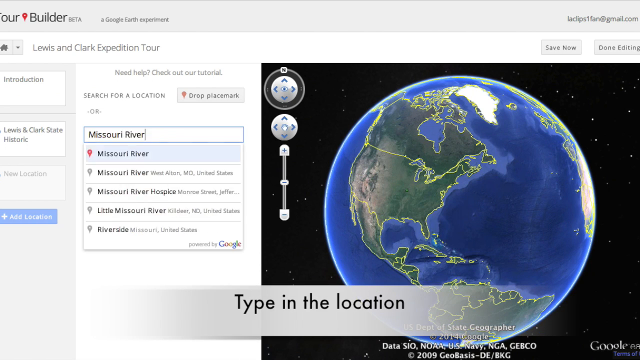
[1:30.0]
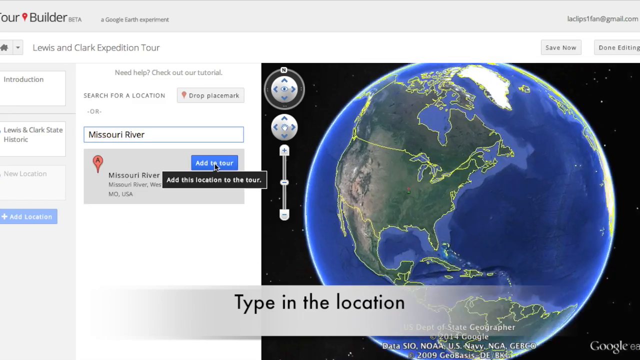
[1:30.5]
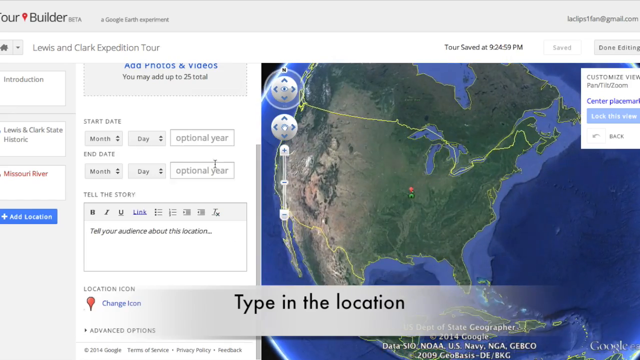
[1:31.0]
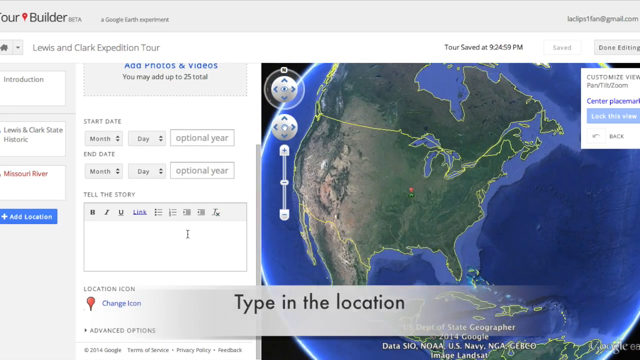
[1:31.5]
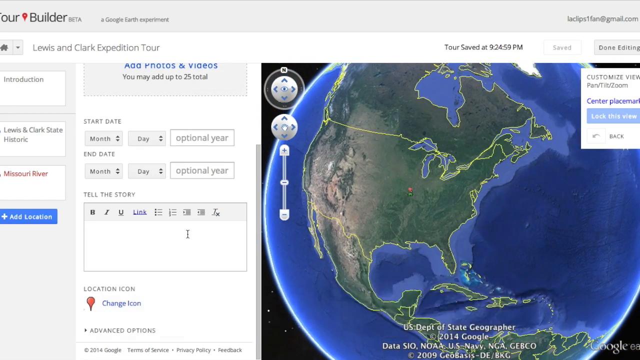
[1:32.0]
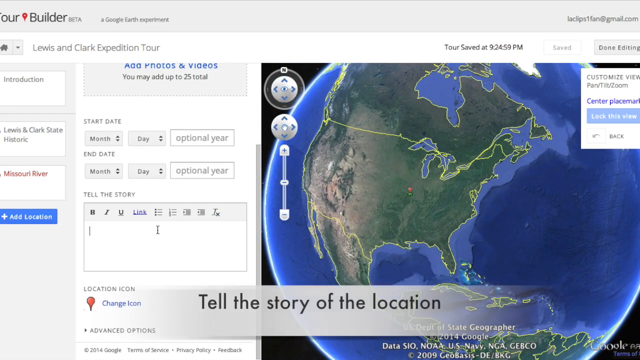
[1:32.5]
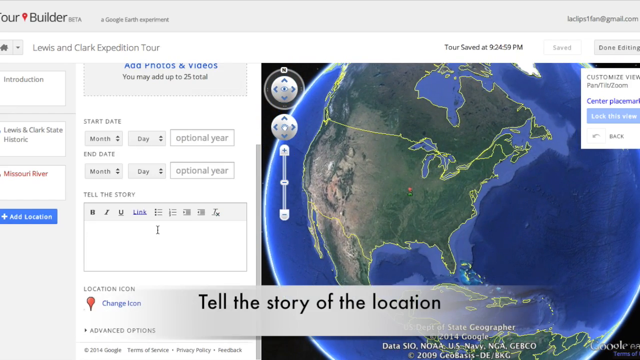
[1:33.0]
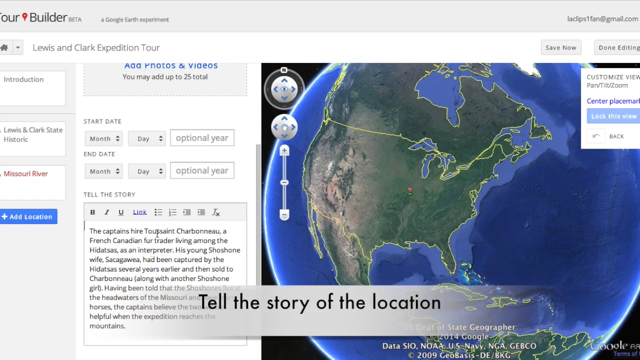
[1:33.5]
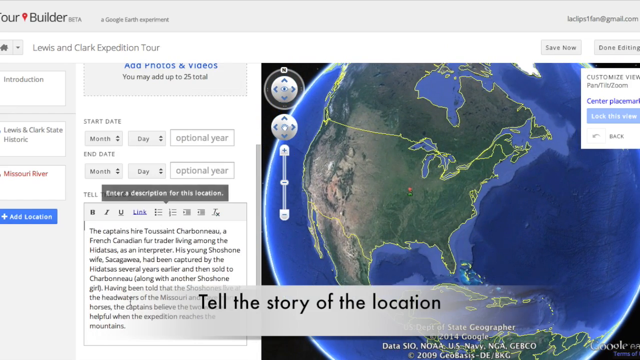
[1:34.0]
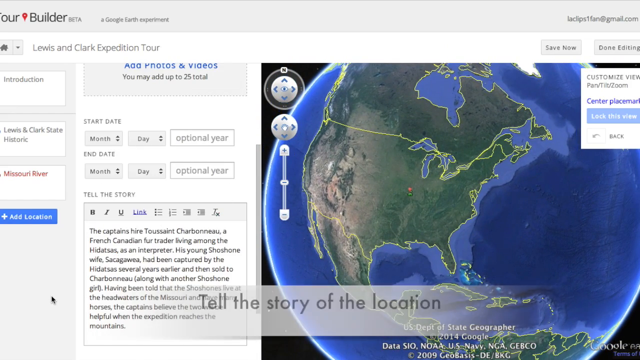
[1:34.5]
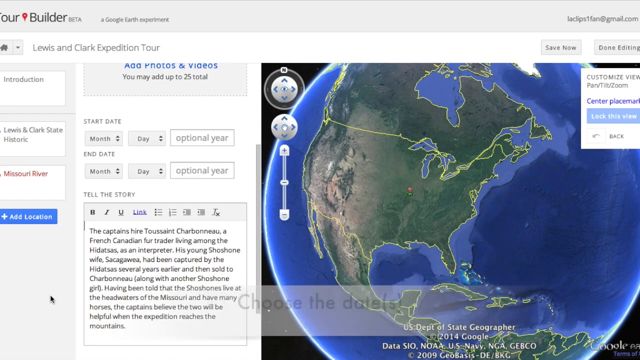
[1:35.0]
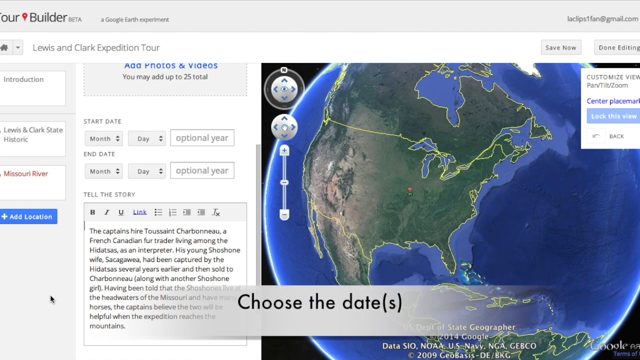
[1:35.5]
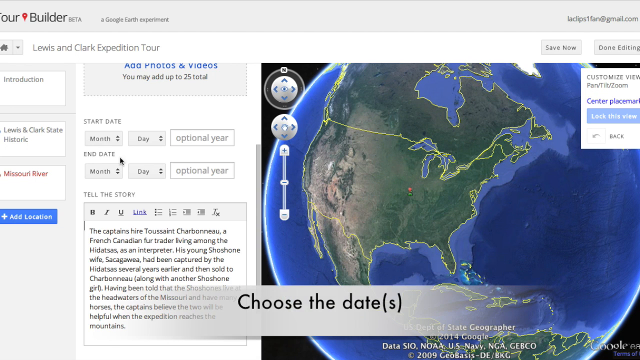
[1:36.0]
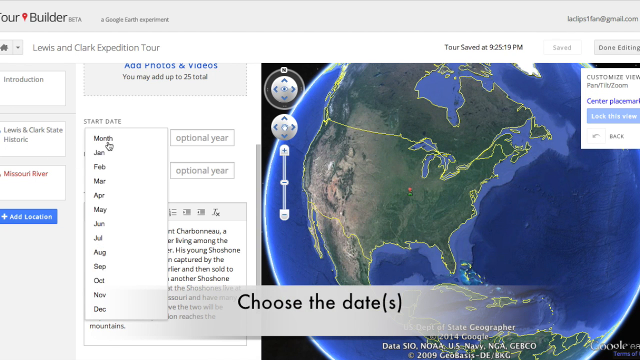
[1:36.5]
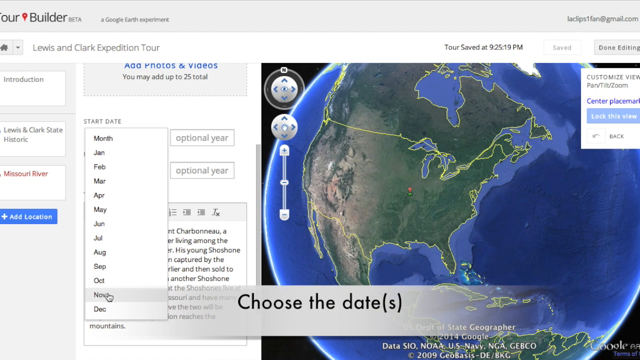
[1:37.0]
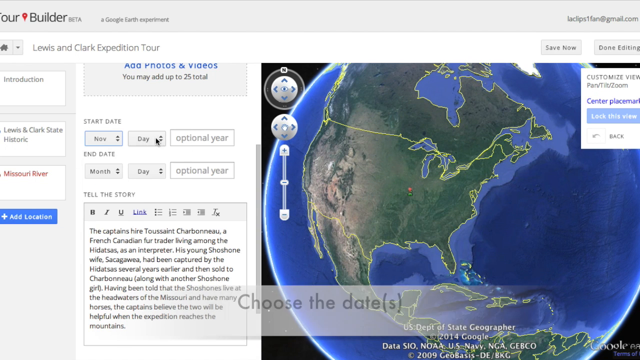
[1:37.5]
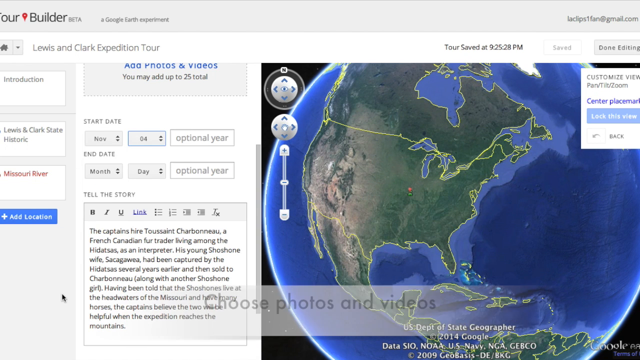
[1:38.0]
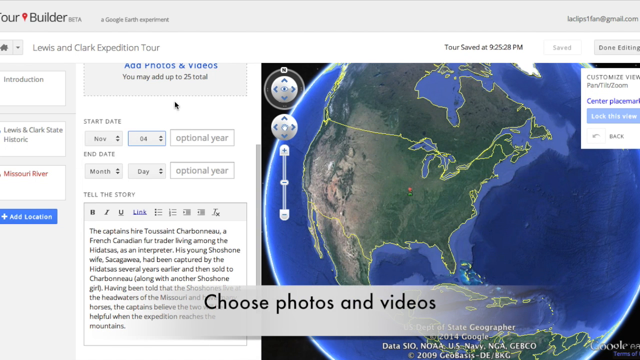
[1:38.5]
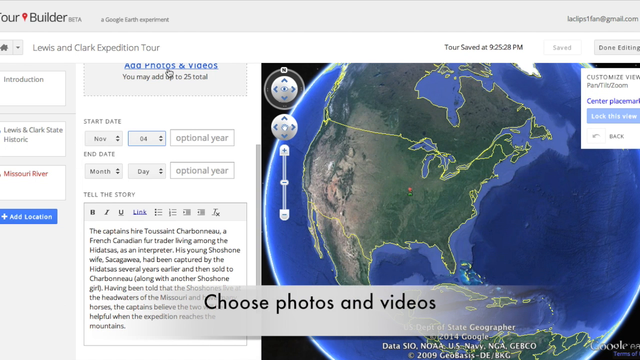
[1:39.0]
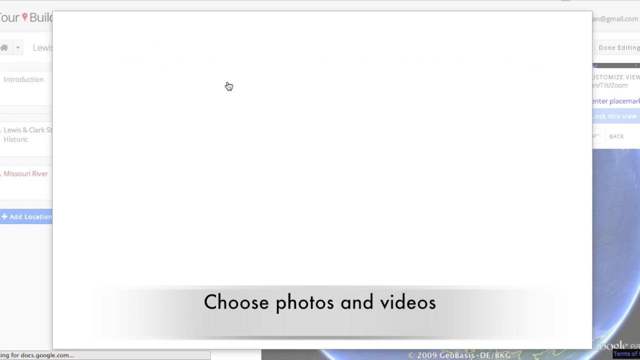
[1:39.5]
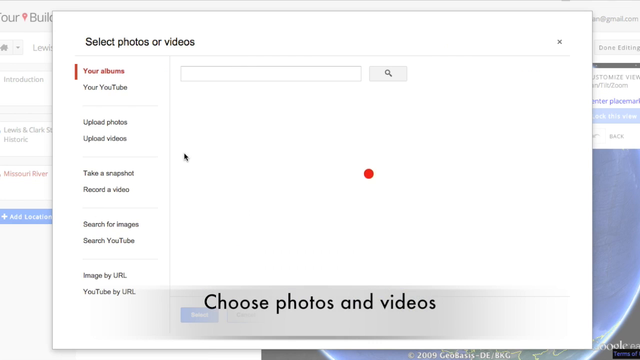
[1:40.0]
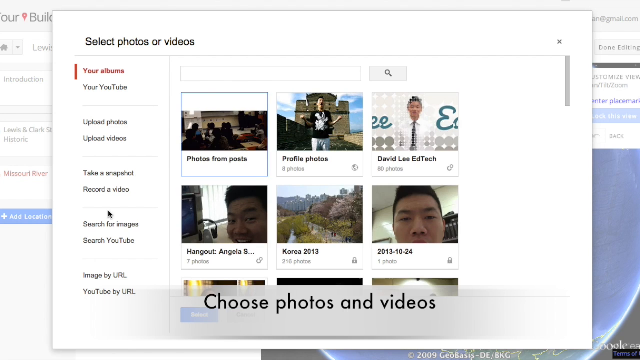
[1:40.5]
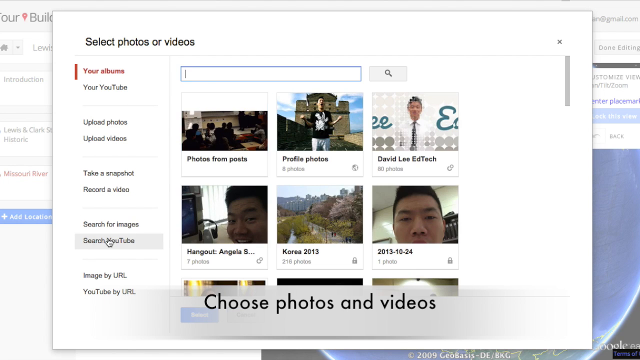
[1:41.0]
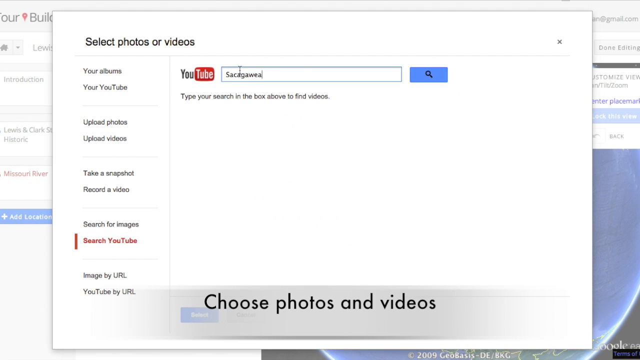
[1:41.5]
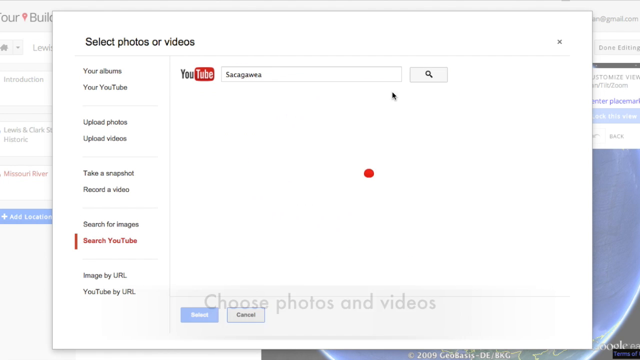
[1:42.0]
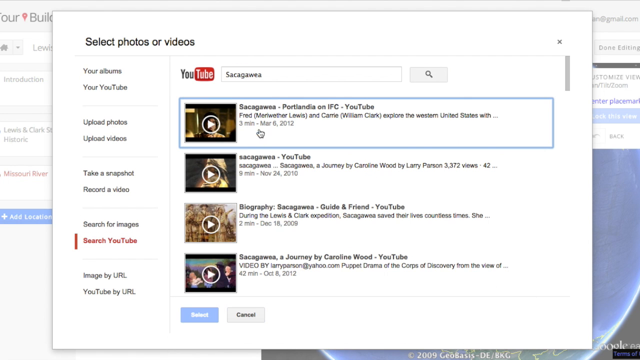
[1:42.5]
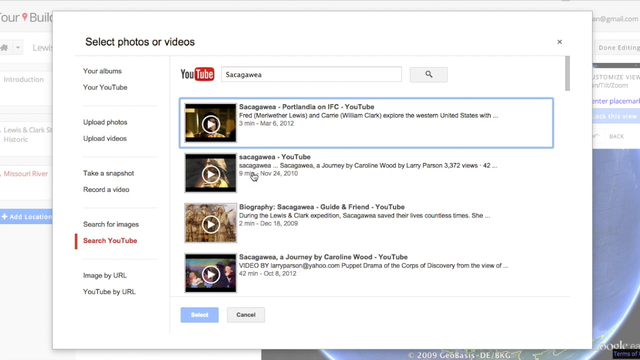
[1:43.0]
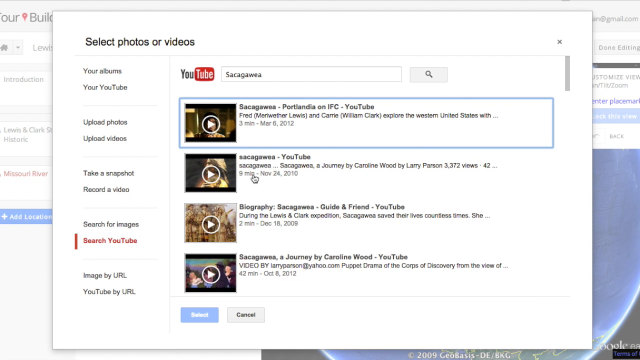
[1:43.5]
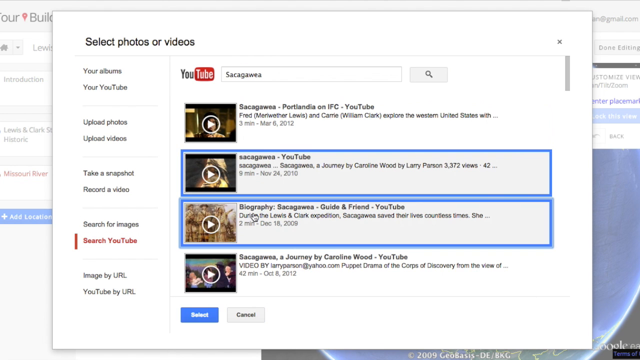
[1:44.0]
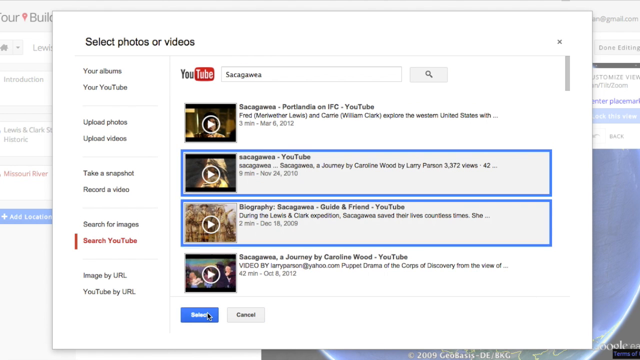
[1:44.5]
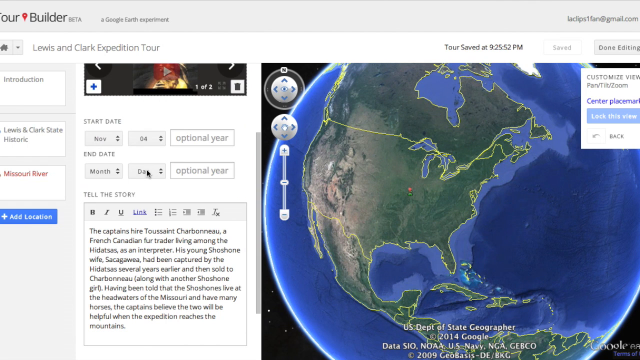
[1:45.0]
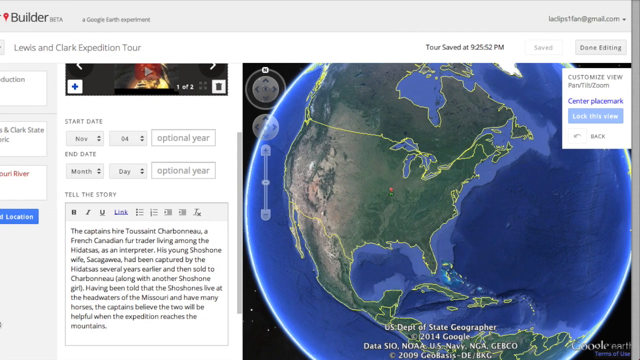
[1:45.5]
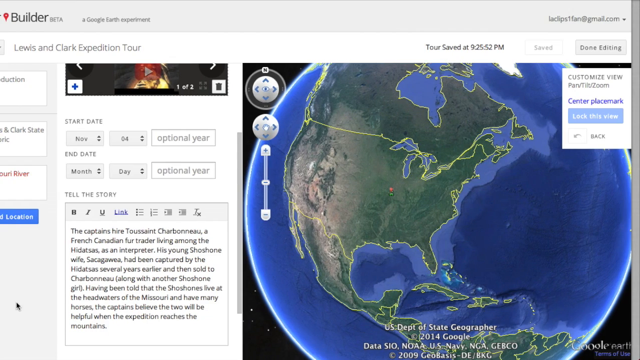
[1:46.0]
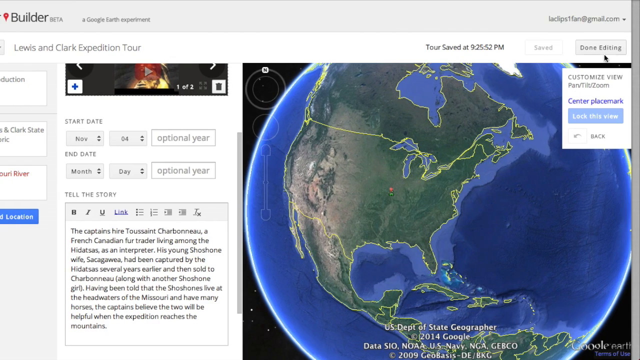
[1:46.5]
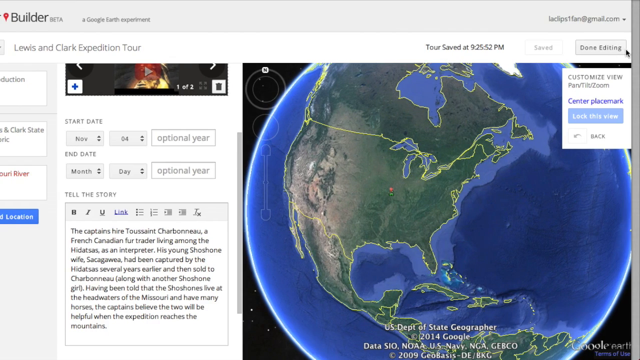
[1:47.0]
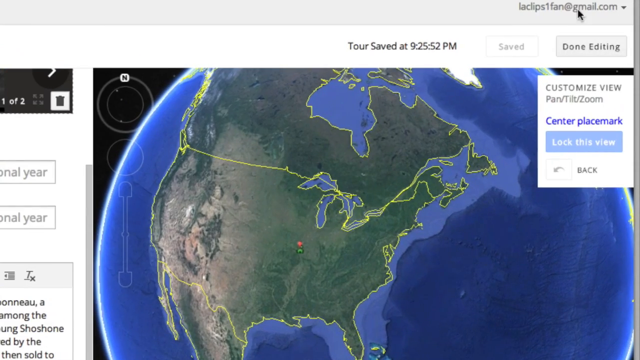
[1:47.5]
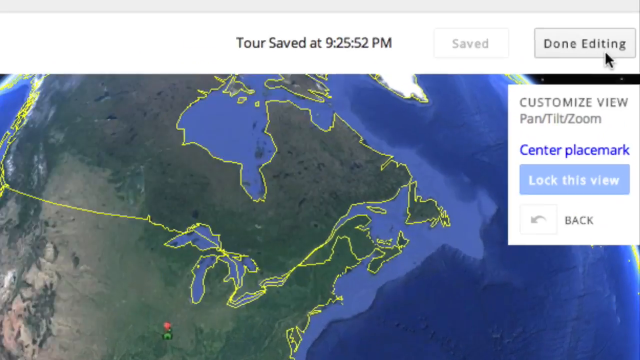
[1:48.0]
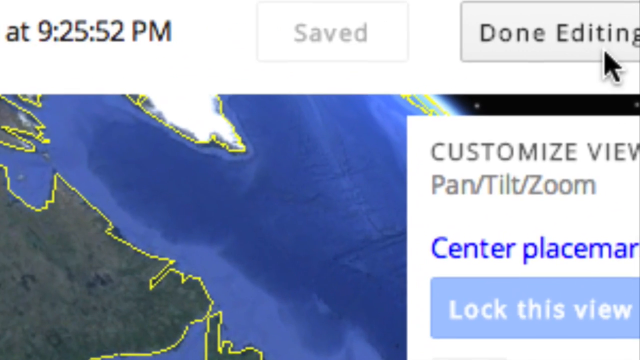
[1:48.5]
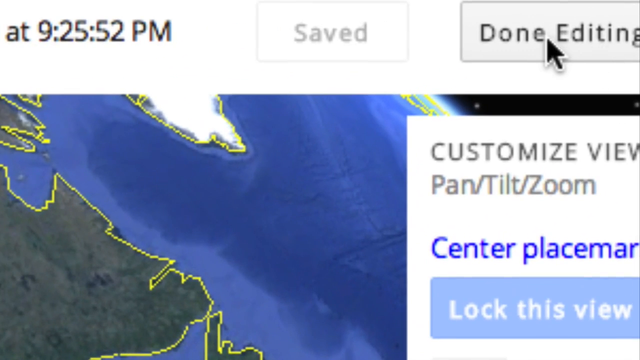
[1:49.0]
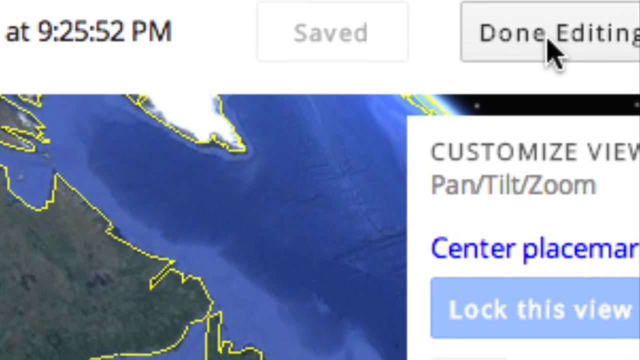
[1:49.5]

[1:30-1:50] The first pin has now been dropped onto the map at the starting location in Illinois. For the new Missouri River location, the user has pasted in a long description that mentions hiring a French-Canadian fur trader and reaching the mountains. A bar appears at the bottom reading "choose dates," and the user clicks November 4th. They then click the add photos and videos part above, which opens a new window. They choose to search YouTube and search for a video whose title includes "Biography Guide and Friend," a video from 2009 about two minutes long, and add it. They zoom in on the map; on the right there is a "done editing" button, which the user clicks. A "create" button then appears, and clicking it shows a new option.